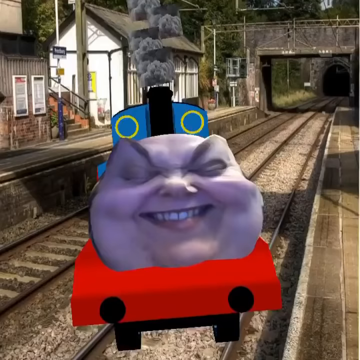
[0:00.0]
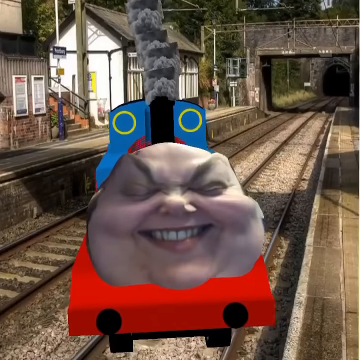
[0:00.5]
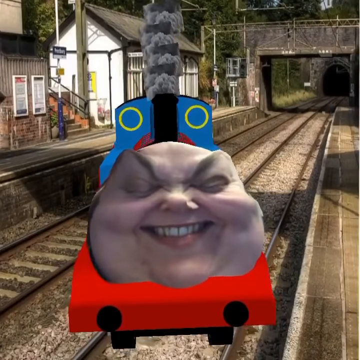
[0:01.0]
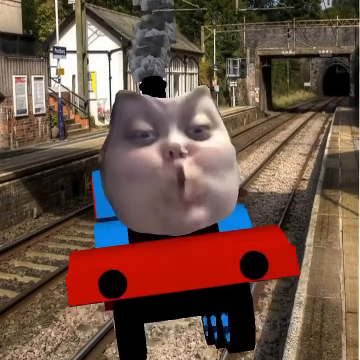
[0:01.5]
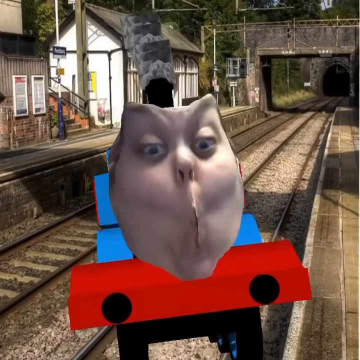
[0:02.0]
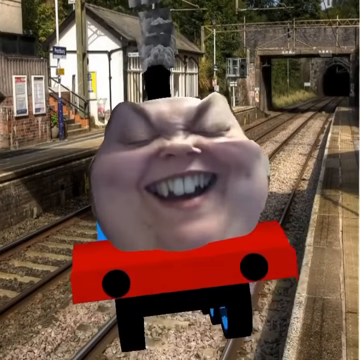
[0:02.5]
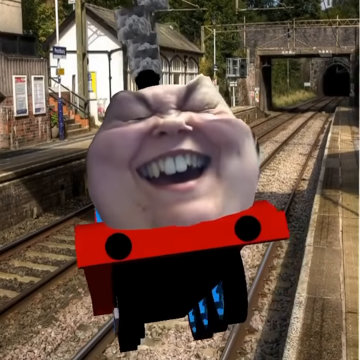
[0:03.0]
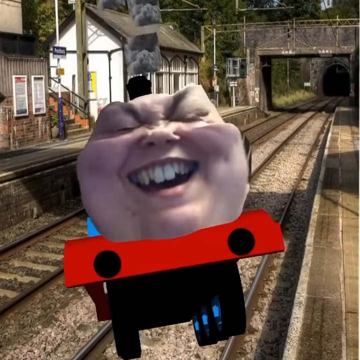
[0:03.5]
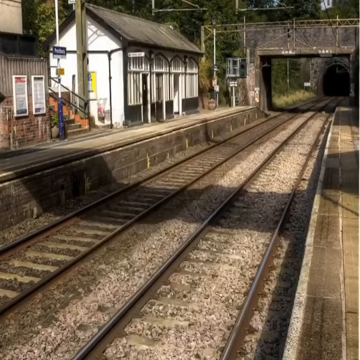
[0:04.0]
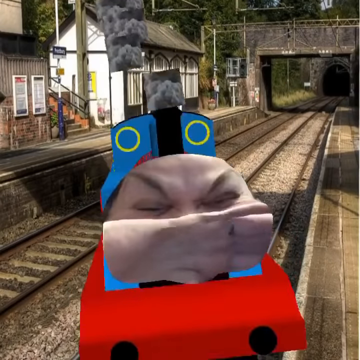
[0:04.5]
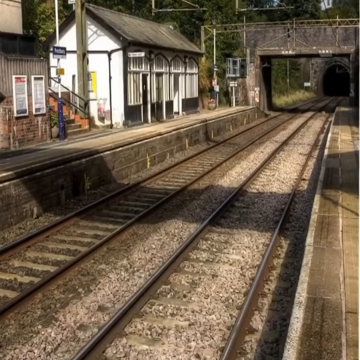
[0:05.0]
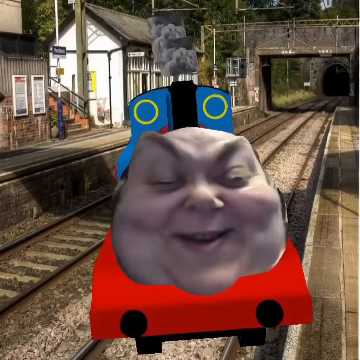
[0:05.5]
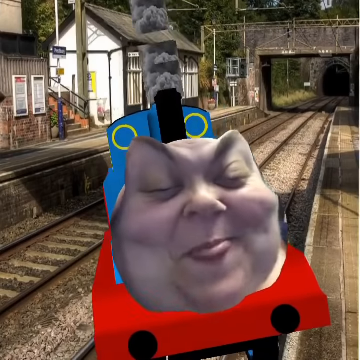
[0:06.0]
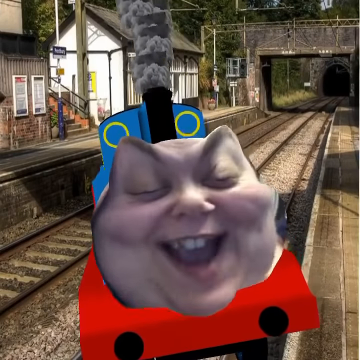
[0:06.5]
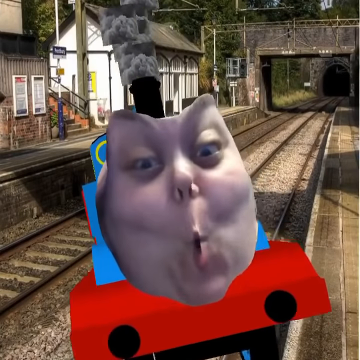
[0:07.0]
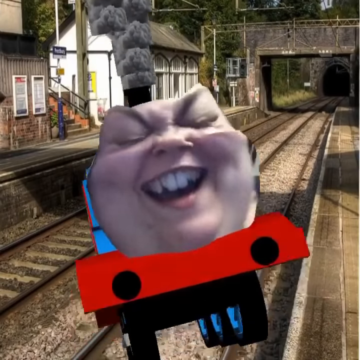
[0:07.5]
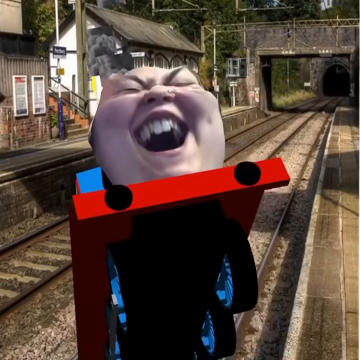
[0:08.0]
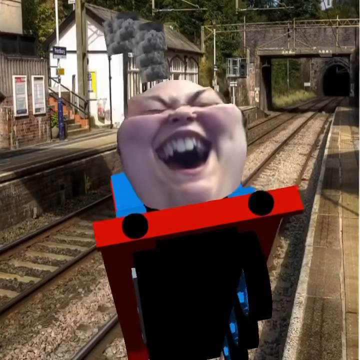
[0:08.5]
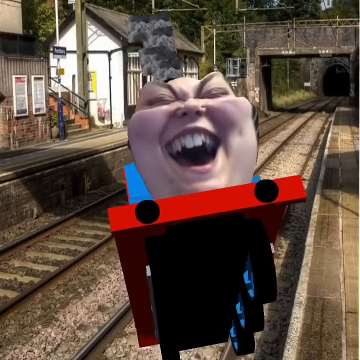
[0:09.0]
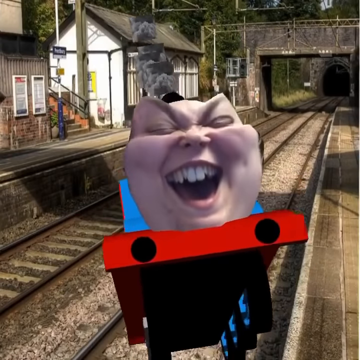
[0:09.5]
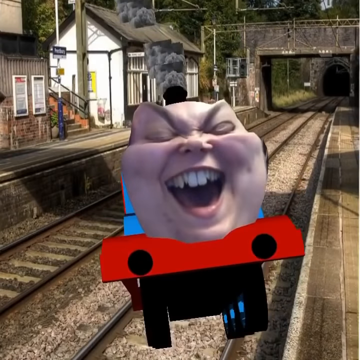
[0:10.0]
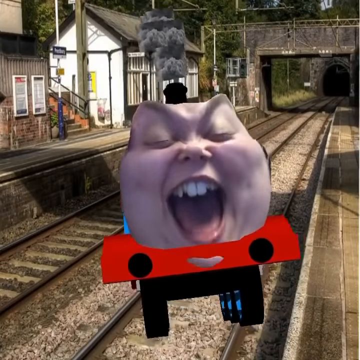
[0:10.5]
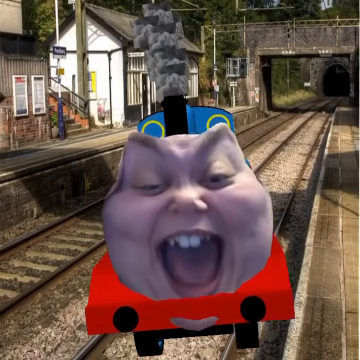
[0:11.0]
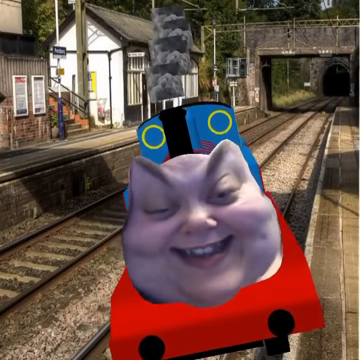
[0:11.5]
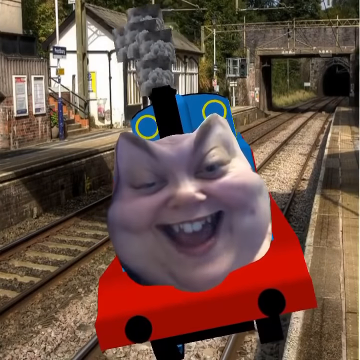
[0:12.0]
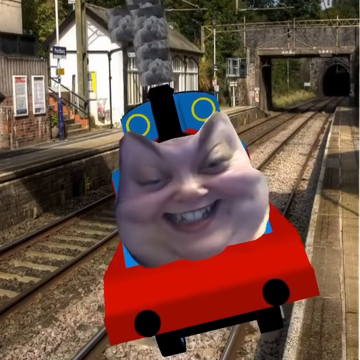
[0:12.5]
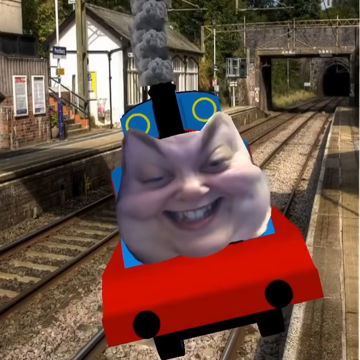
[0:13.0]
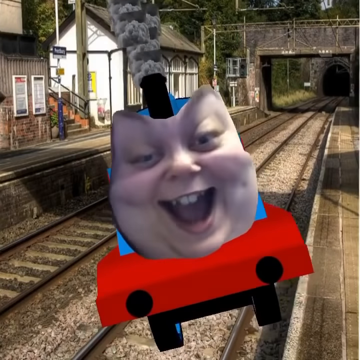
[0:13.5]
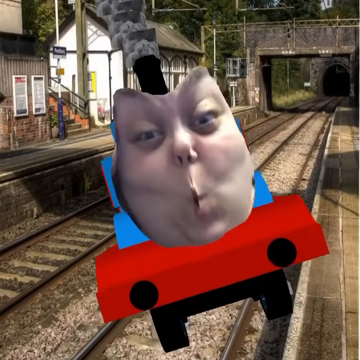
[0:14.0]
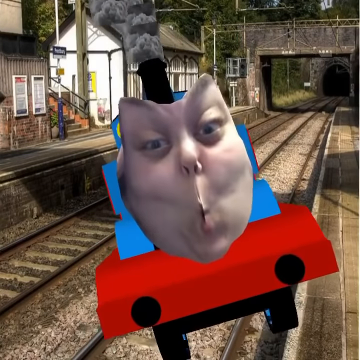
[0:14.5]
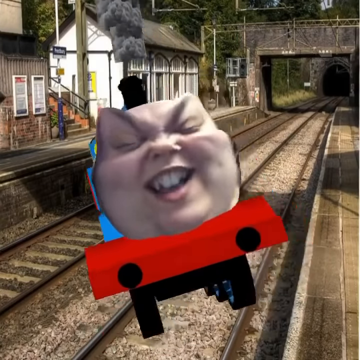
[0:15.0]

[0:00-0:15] A drawing or animation shows a creature that looks like Thomas the Tank, except that a face is superimposed onto the front of the tank. The face apparently belongs to a person possibly using a screen filter that superimposes their face onto the front of the Thomas the Tank engine, and they make goofy faces: smiling, laughing, and moving their mouth in odd gestures. Thomas the Tank is sort of on some railroad tracks, but instead of sitting on them, the engine is kind of lifted up off the tracks, moving around as the superimposed face makes its goofy expressions. Smoke comes out of the engine's smoke stack. In the background there is a tunnel that railroad tracks come out of, as if that is where the engine has come from. To the left of it is a platform that seems to be a train station, with a white building in the background and a more tan-colored building to the left of it.